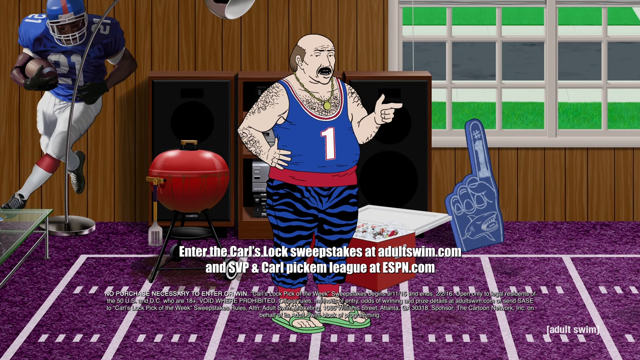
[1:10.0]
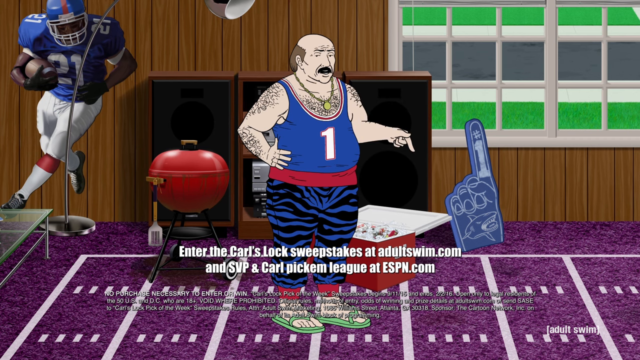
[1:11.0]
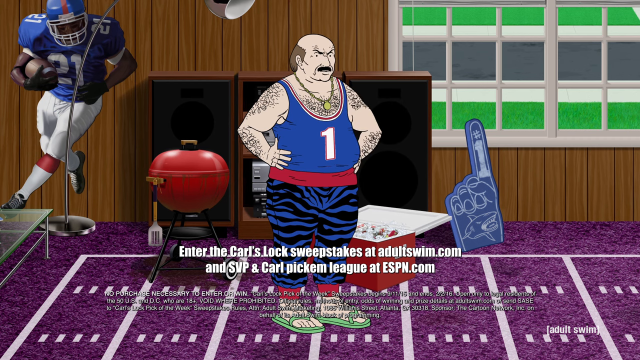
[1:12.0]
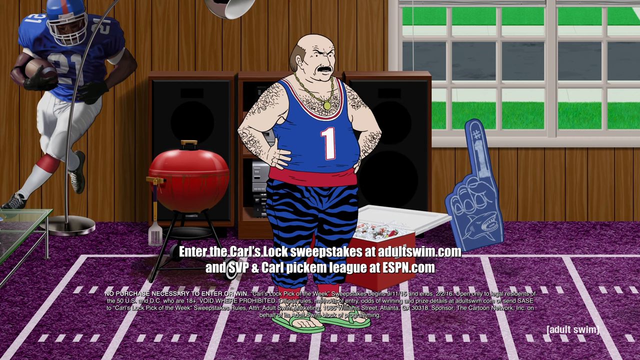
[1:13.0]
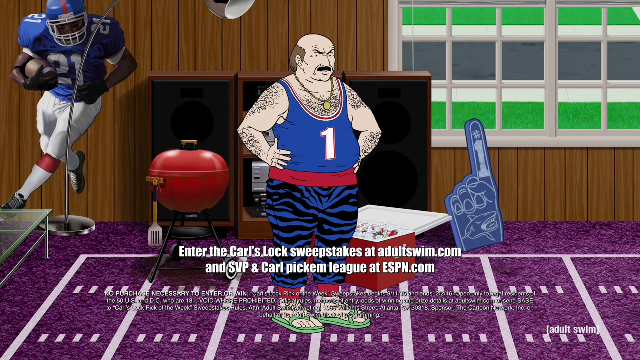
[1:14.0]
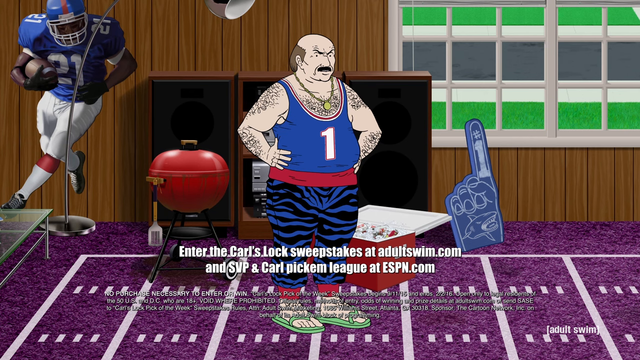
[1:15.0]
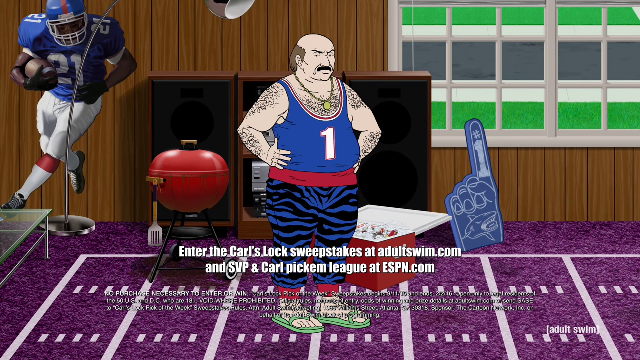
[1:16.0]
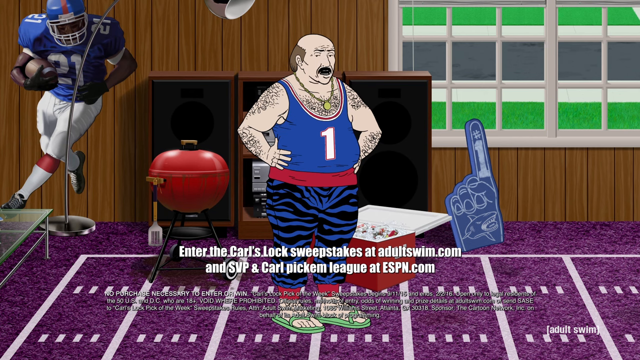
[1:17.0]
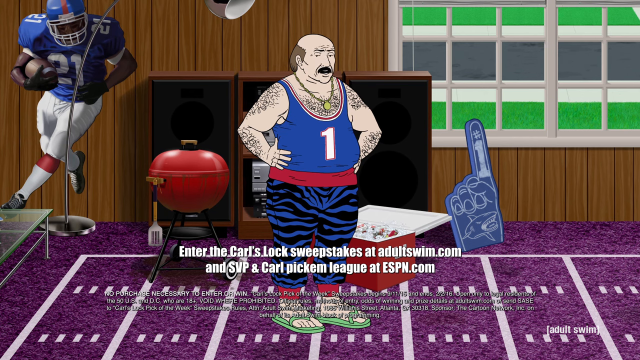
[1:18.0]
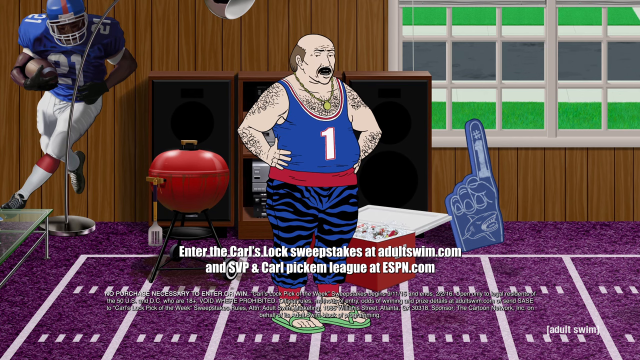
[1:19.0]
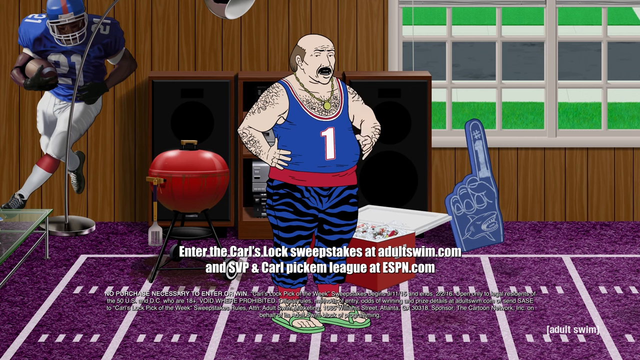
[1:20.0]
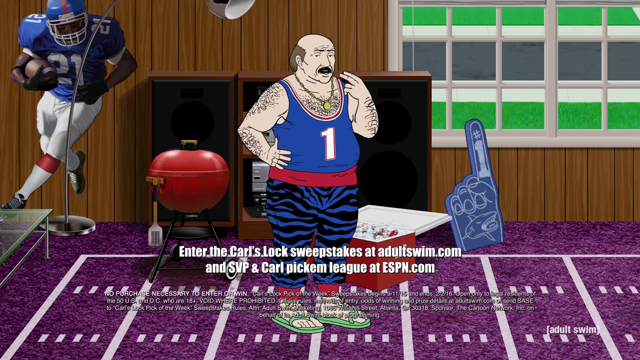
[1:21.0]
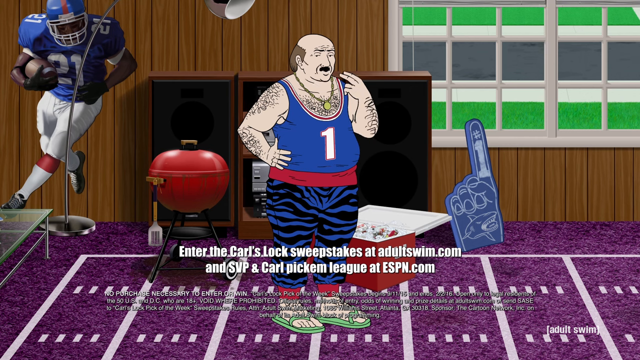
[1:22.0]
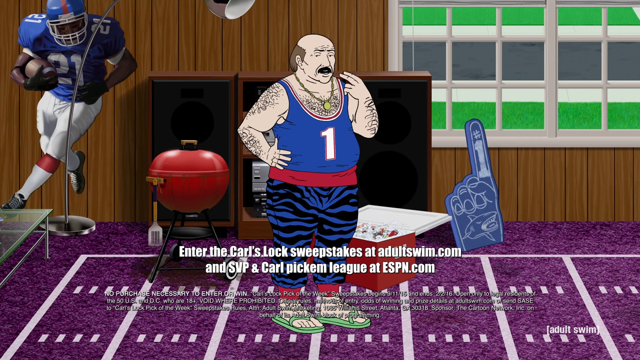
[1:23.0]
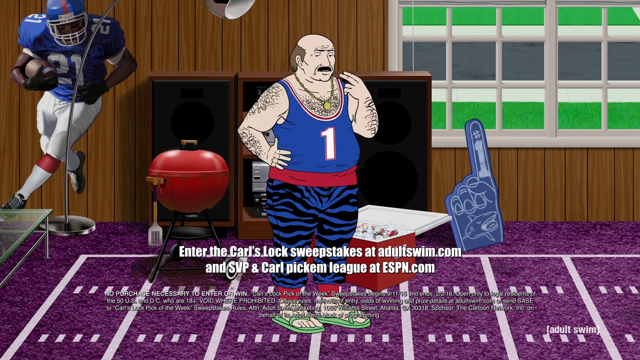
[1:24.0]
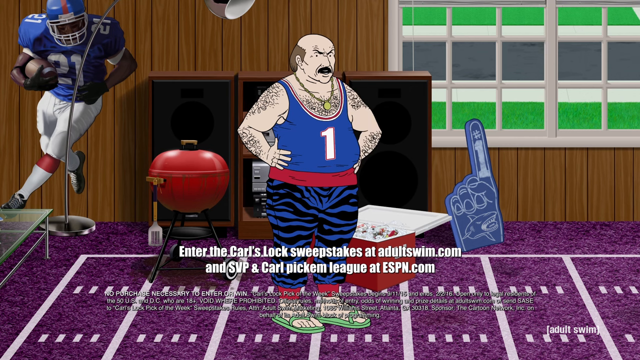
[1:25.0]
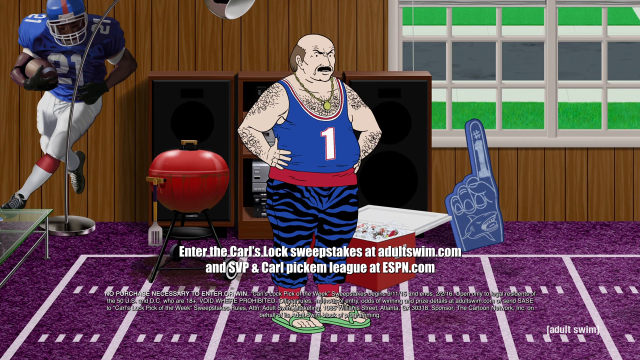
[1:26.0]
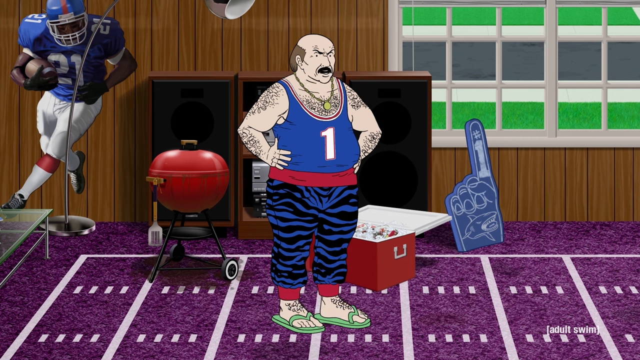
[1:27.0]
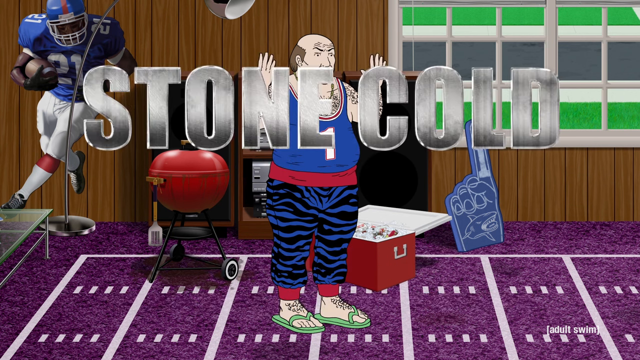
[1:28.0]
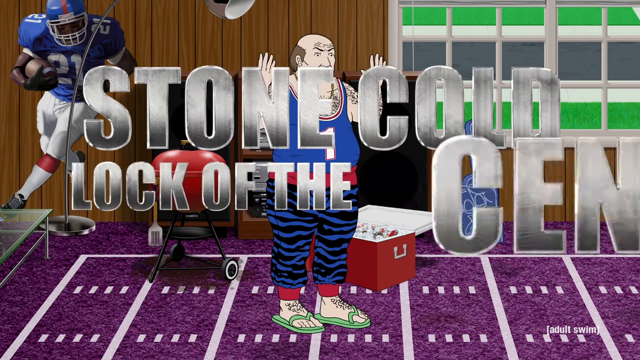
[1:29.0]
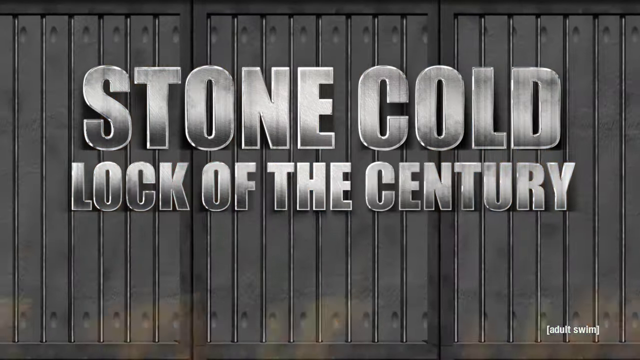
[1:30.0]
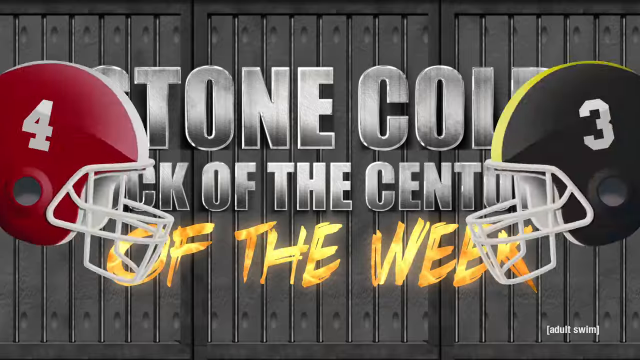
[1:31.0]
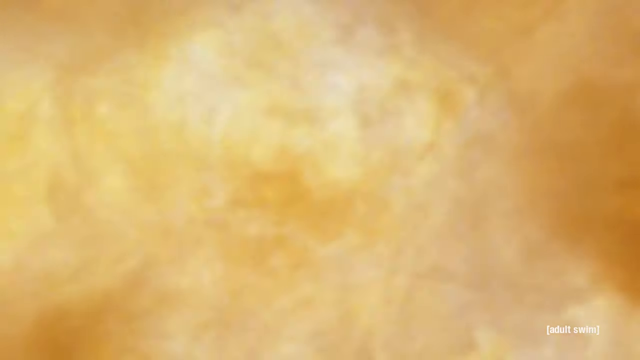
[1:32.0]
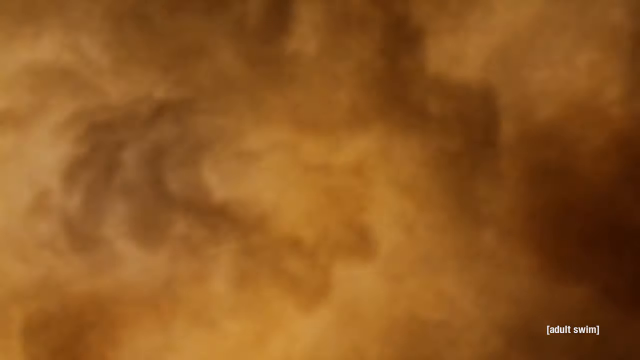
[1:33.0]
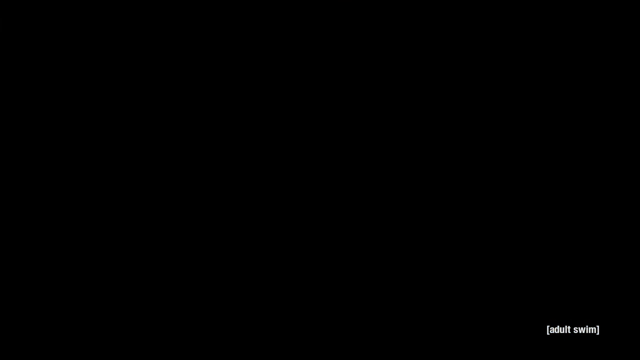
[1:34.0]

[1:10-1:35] A number 21 cutout is on the wall, along with an entertainment center, and purple carpet designed to look like a football field covers the floor. A glass table is to the left and a barbecue grill is right in front of the entertainment center, with a cooler of ice and drinks right next to the grill. An avatar of a white man stands in the middle of the floor: overweight, with a hairy body and hairy chest, wearing a blue sleeveless jersey with red trim and a number one on it, blue tight zebra-striped pants and green flip-flops. Across the screen, text reads "enter the Carl's Lock Sweepstakes at adultswim.com". The scene then goes back to Stone Cold and cuts.